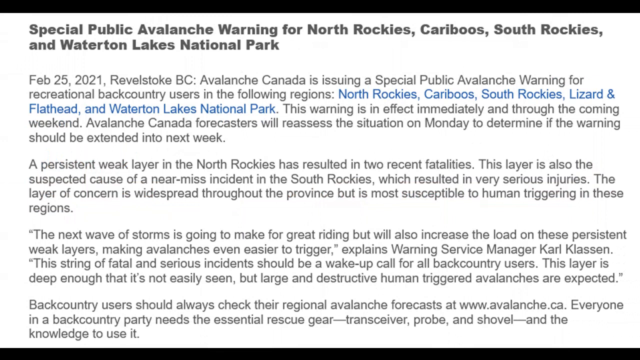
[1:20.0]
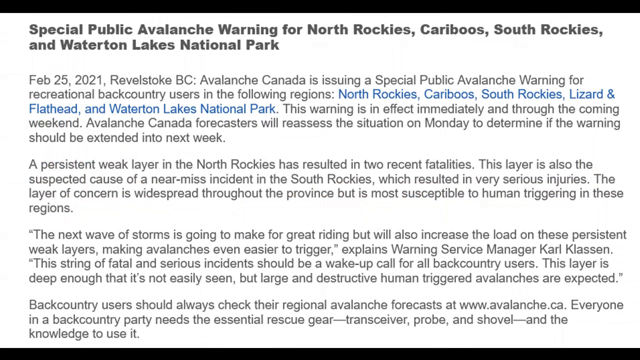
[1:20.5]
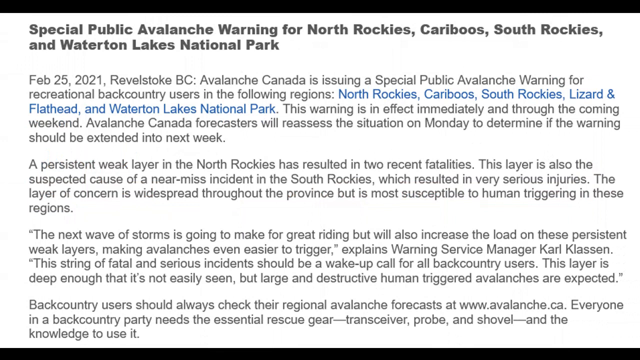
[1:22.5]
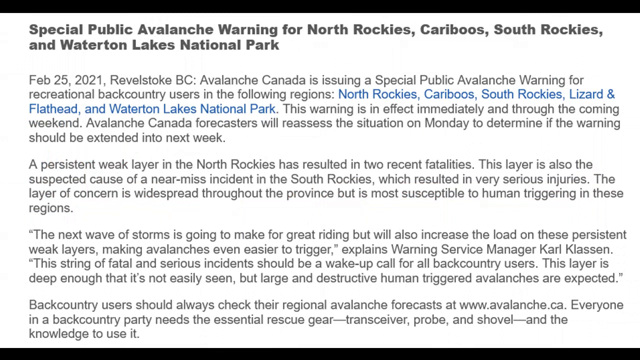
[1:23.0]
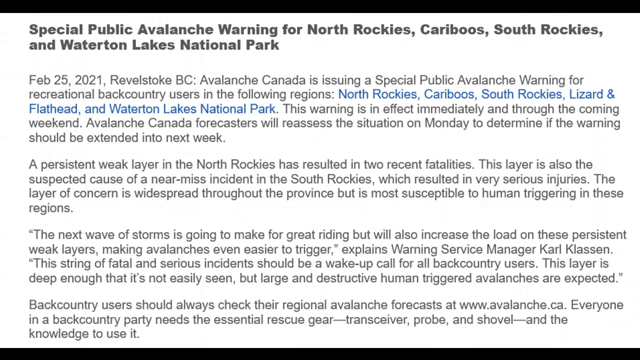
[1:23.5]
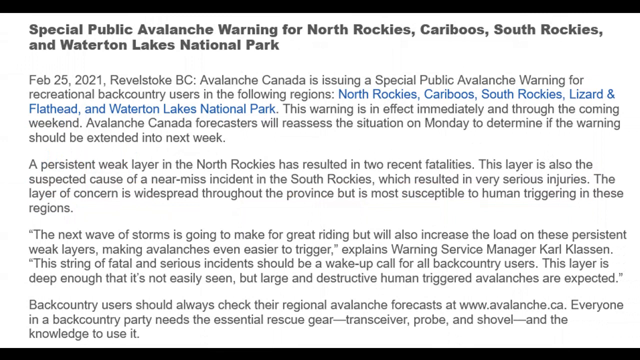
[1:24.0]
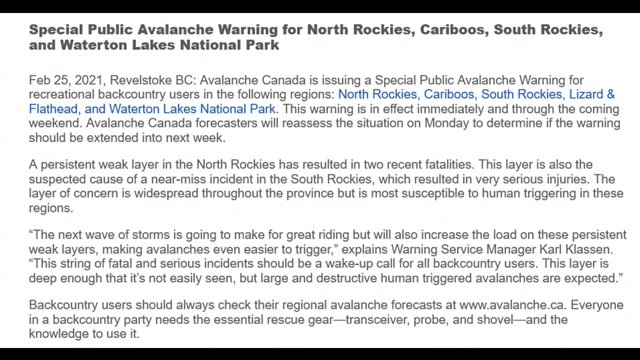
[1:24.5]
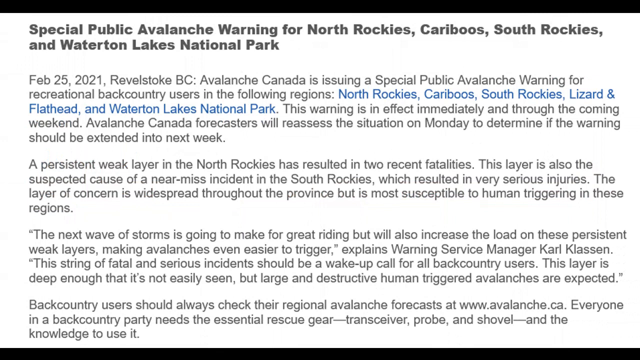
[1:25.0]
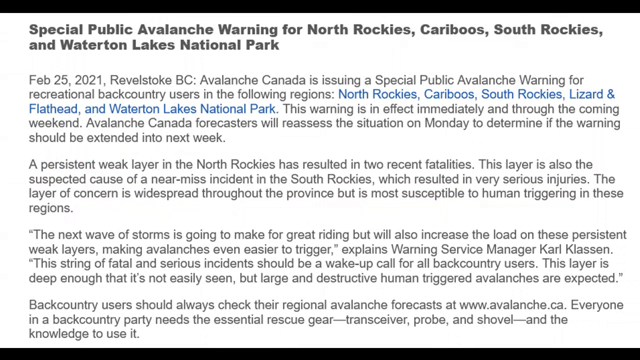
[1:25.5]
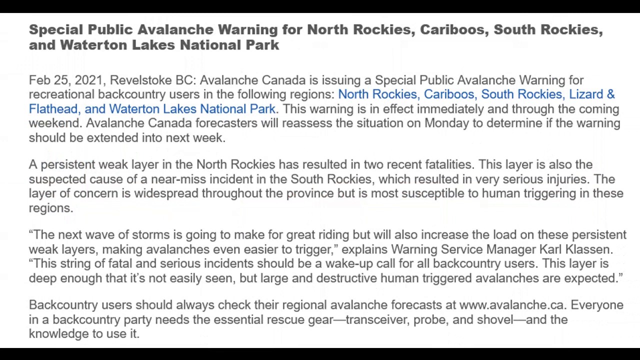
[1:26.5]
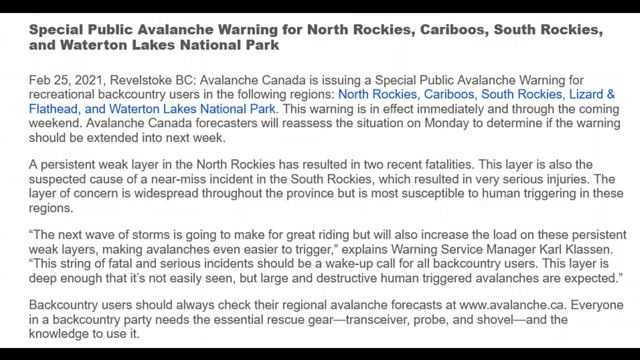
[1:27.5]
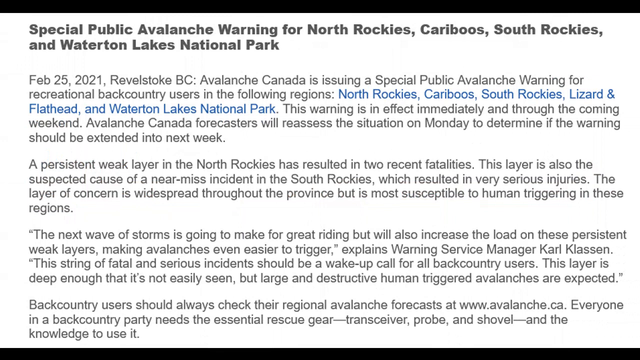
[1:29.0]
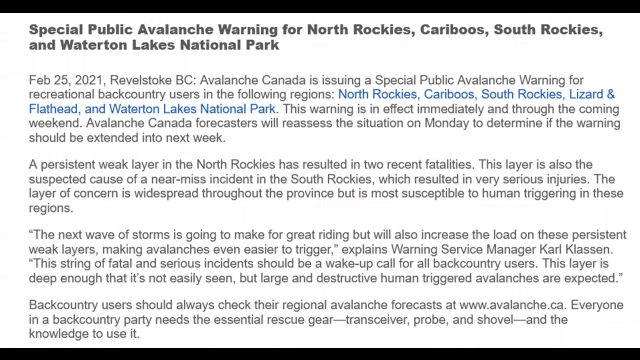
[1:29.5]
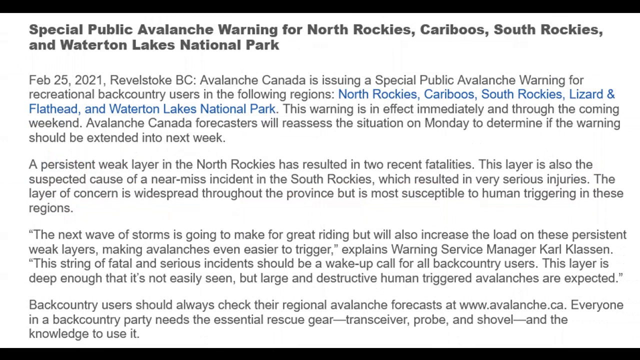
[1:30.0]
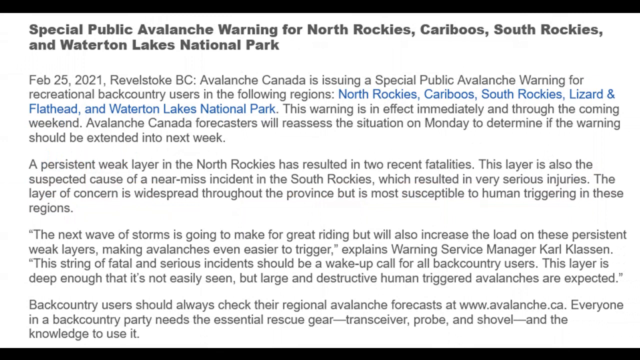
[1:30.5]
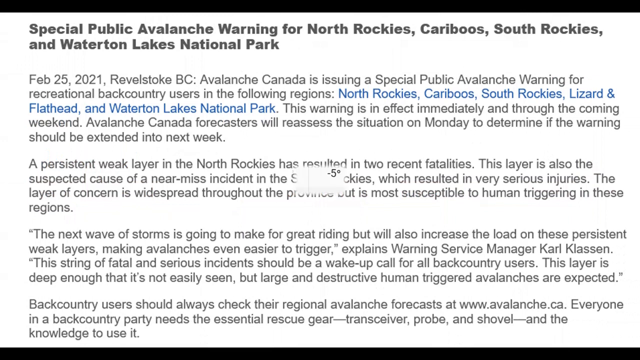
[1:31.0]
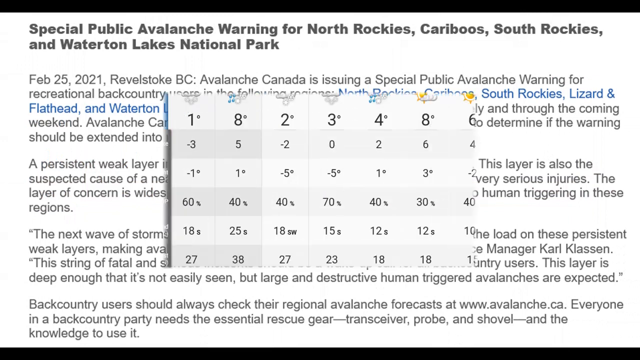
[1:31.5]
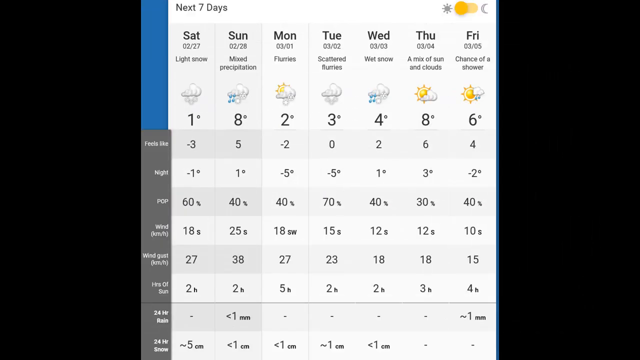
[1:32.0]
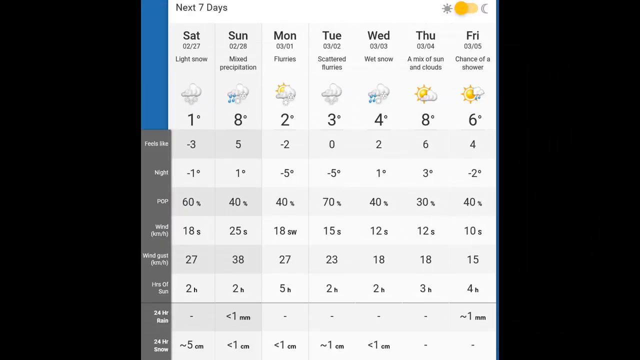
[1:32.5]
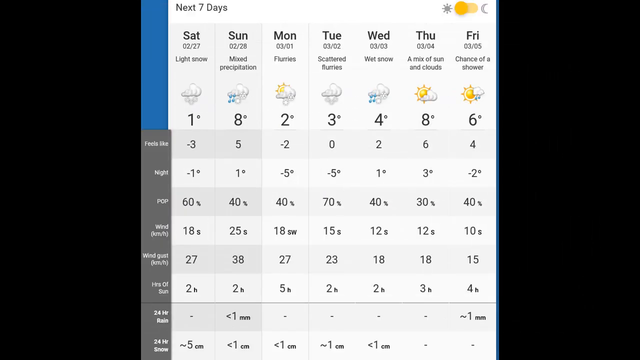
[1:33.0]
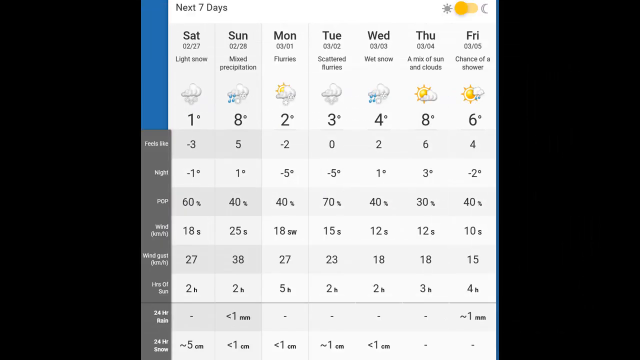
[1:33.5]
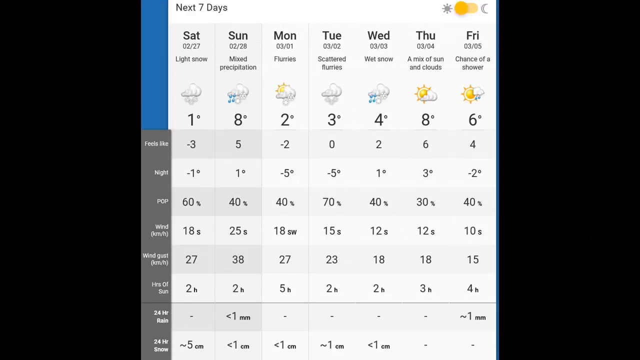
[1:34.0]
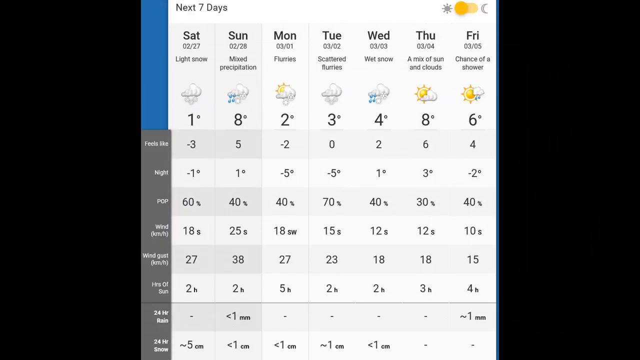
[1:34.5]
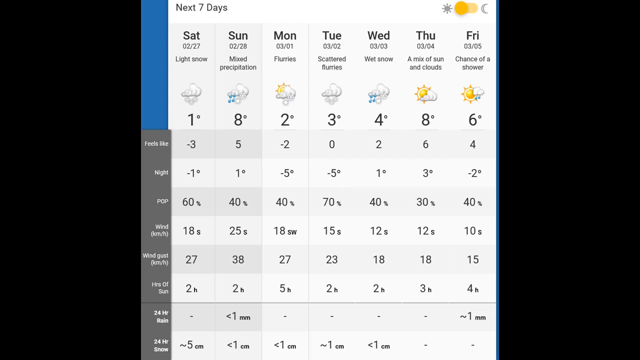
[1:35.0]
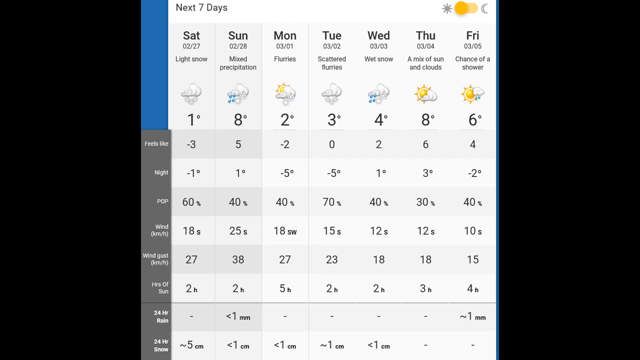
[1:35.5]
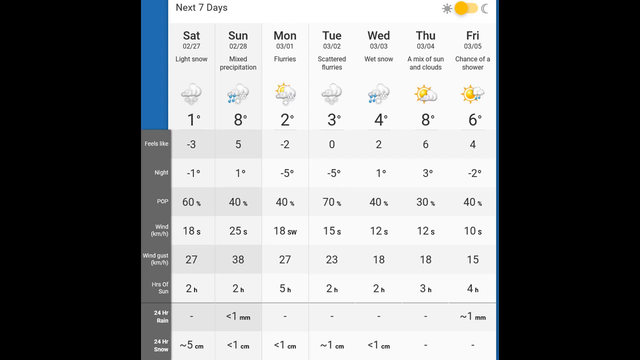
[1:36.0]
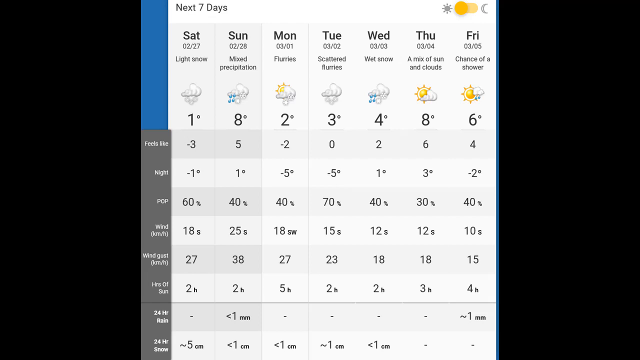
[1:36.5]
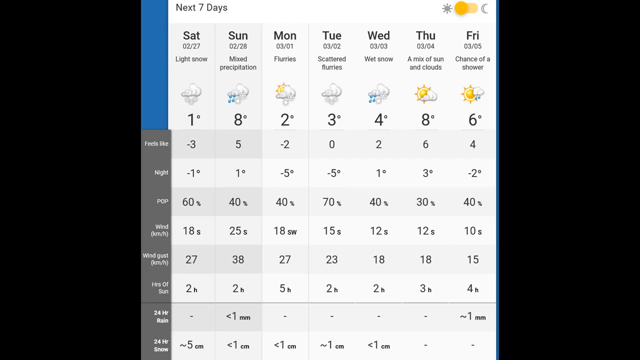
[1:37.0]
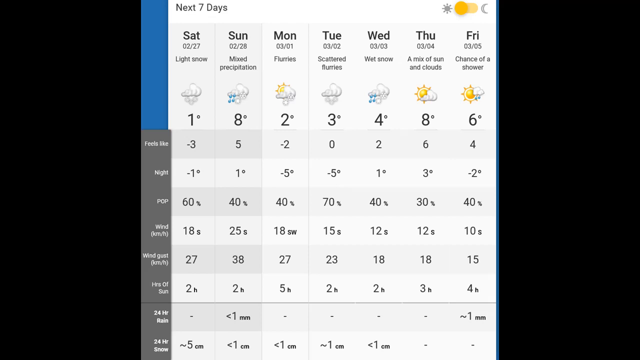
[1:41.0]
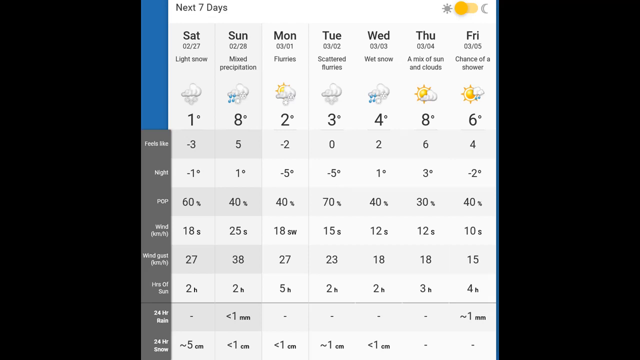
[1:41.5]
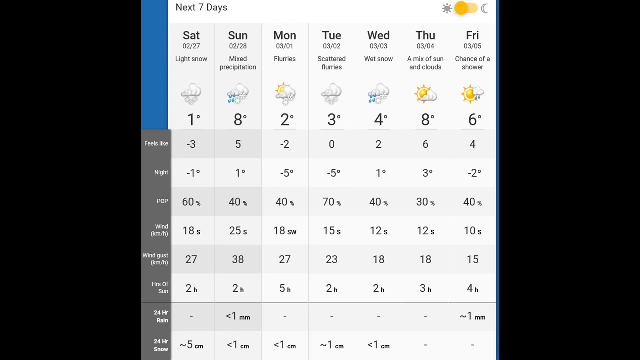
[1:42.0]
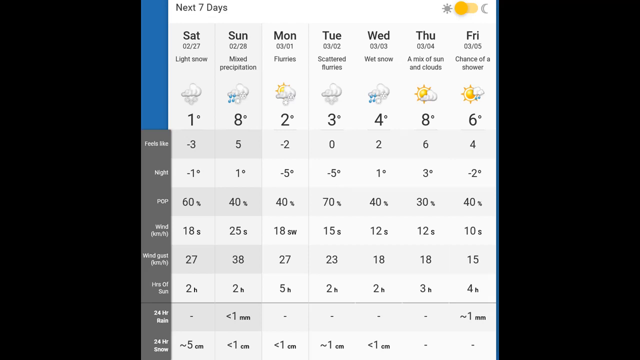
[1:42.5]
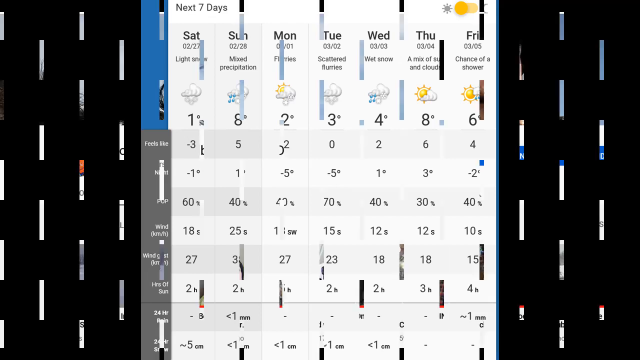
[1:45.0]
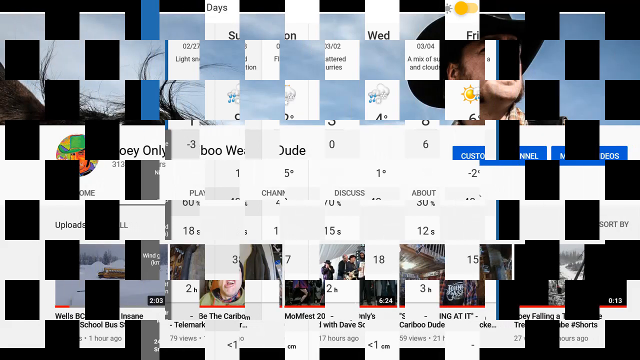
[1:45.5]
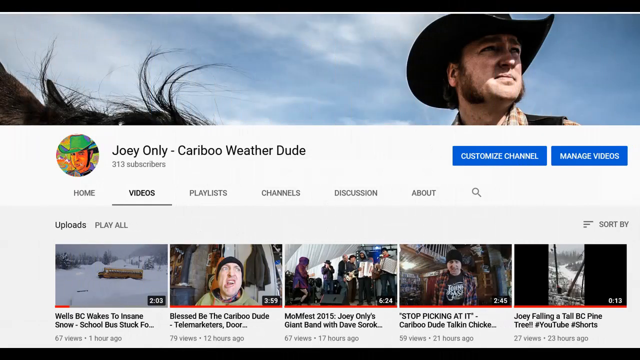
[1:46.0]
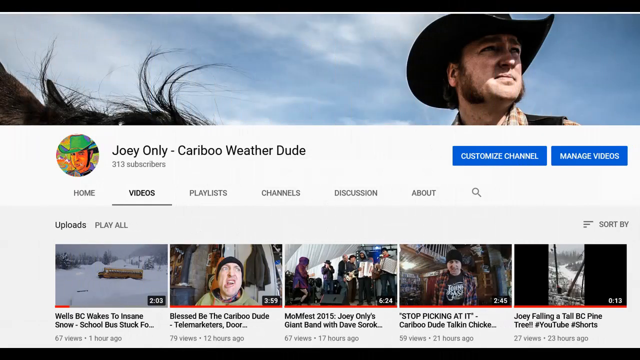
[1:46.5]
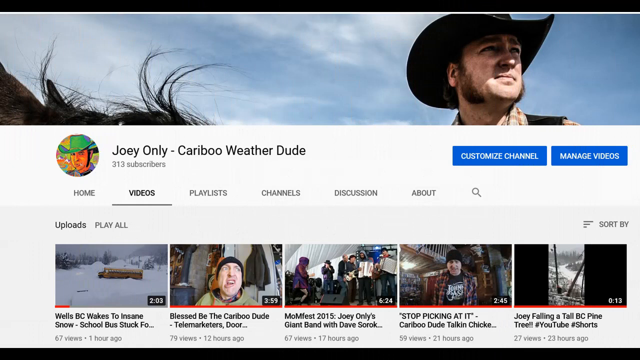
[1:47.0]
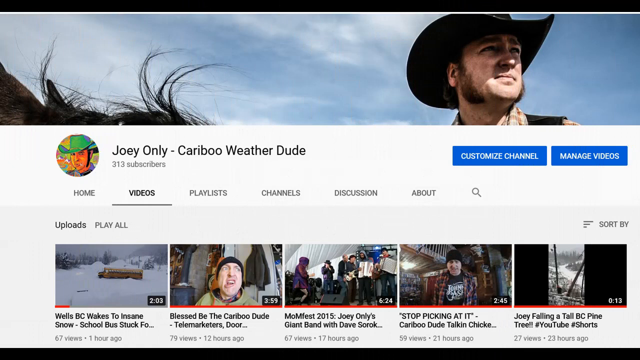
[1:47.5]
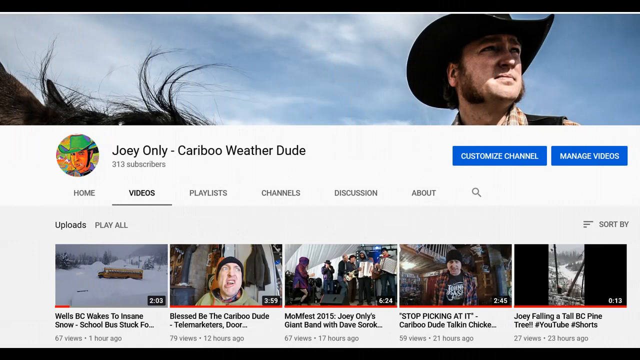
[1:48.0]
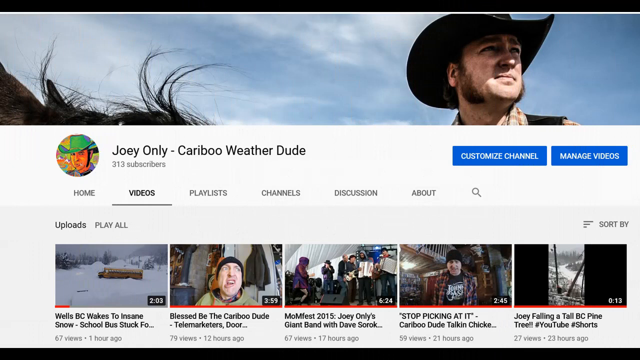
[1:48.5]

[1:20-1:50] A report on screen announces a special public avalanche warning for the North Rockies, Cariboo and South Rockies regions, mentioning the Flathead and a national park. It states that Avalanche Canada is issuing the warning for recreational backcountry users in these regions, that "this warning is effective immediately and through the coming weekend", and that Avalanche Canada forecasters will reassess the situation on Monday to determine whether the warning should be extended into the next week. The warning tells people to stay away from certain locations for their safety.